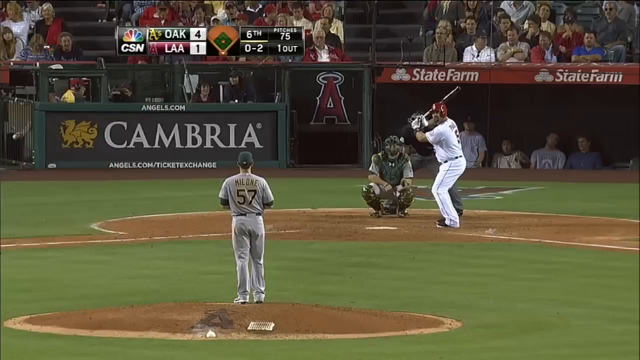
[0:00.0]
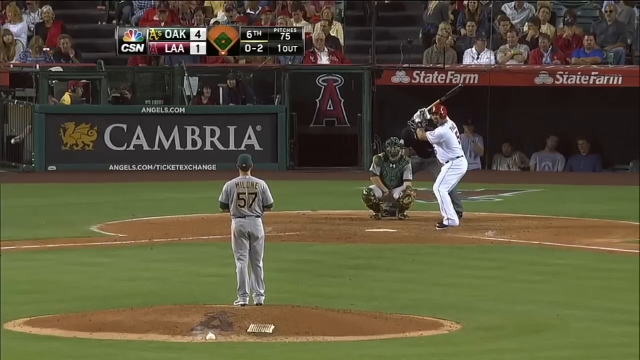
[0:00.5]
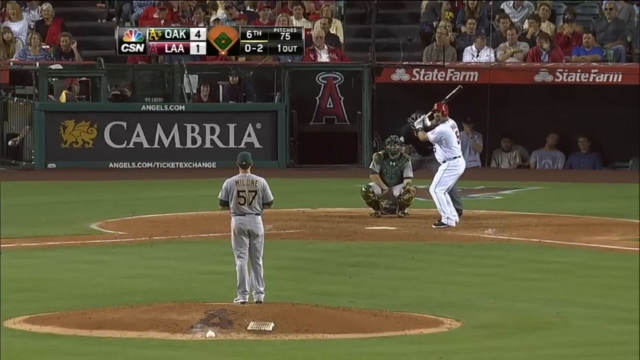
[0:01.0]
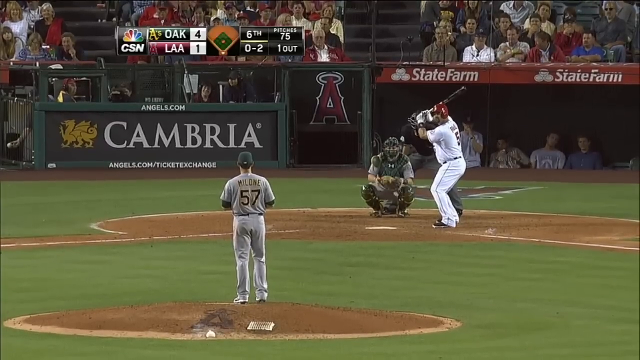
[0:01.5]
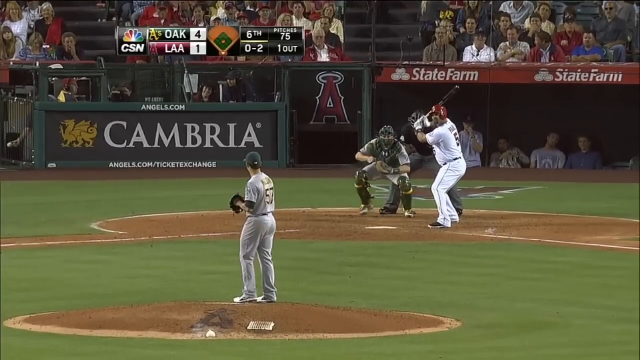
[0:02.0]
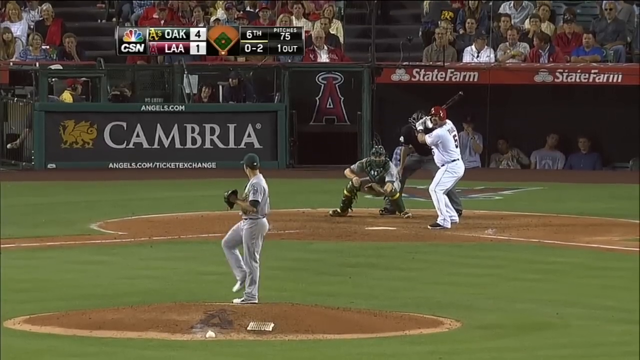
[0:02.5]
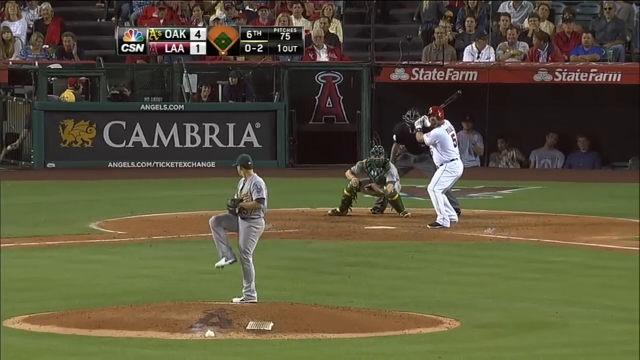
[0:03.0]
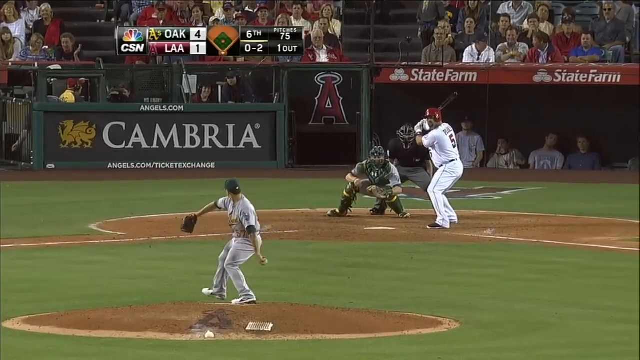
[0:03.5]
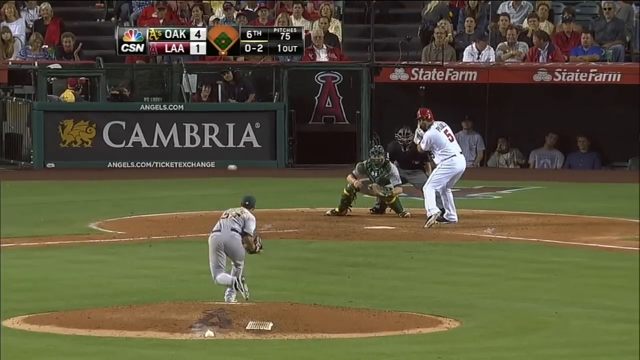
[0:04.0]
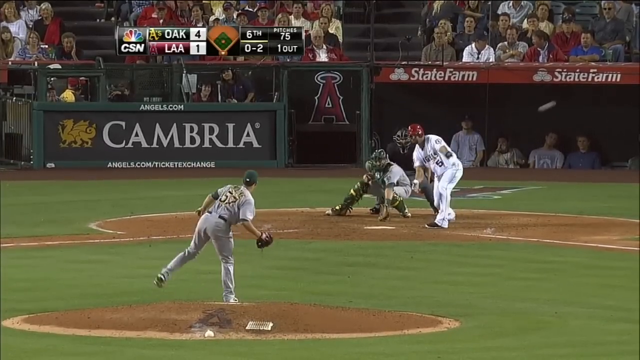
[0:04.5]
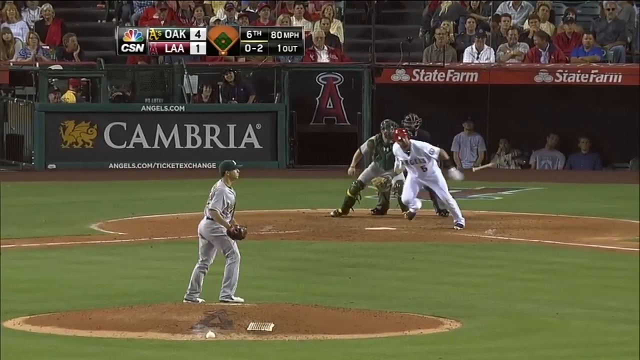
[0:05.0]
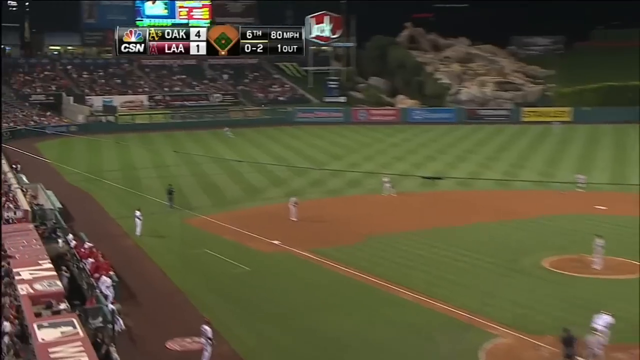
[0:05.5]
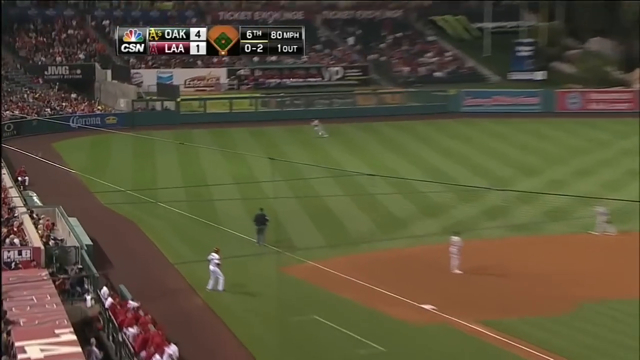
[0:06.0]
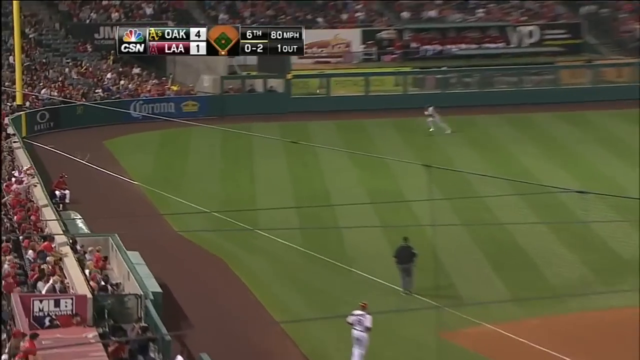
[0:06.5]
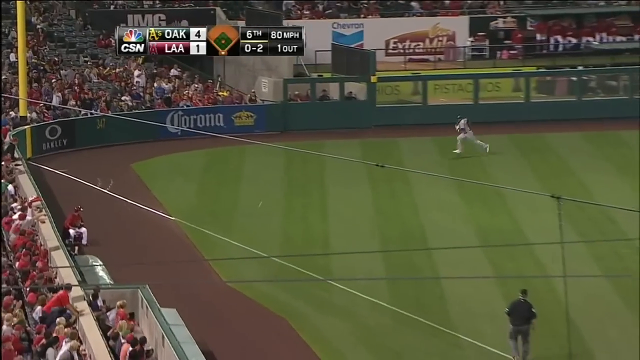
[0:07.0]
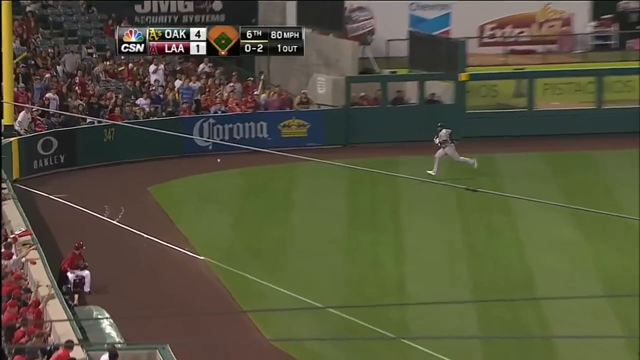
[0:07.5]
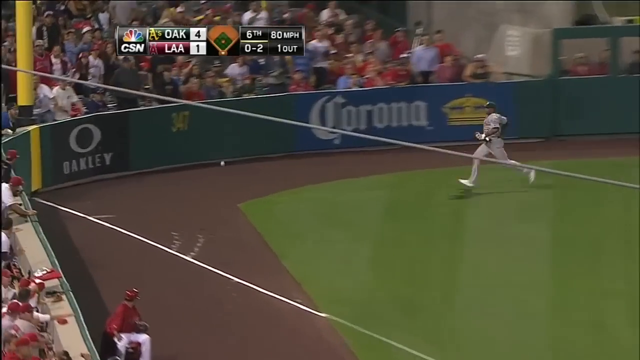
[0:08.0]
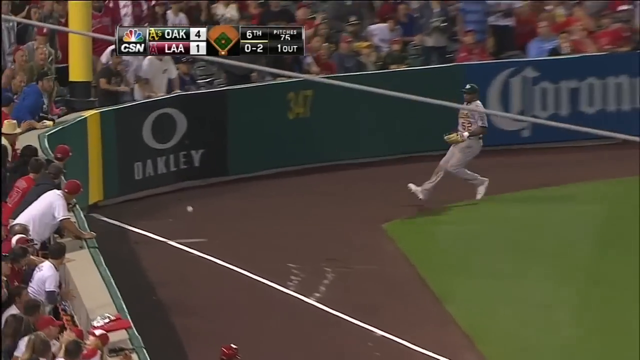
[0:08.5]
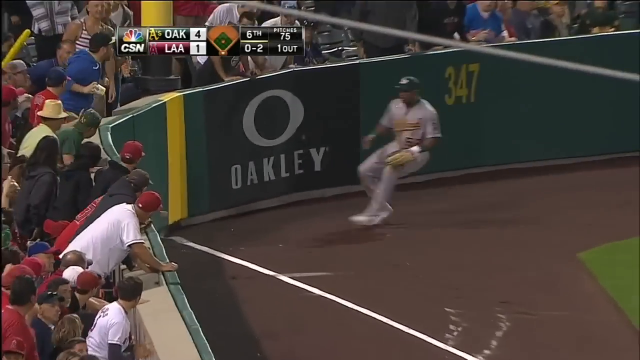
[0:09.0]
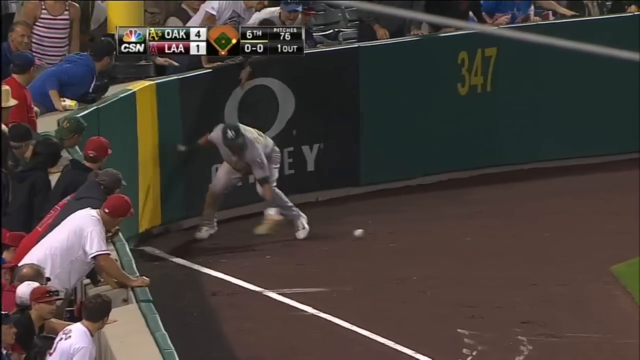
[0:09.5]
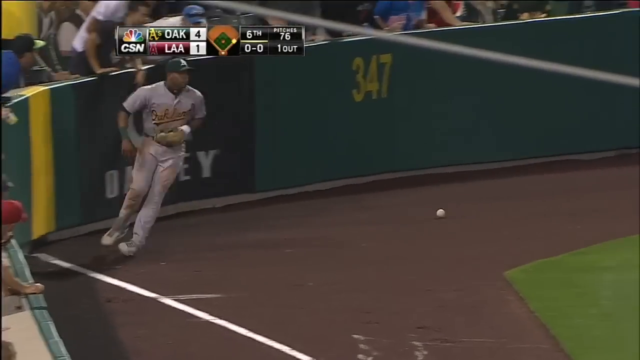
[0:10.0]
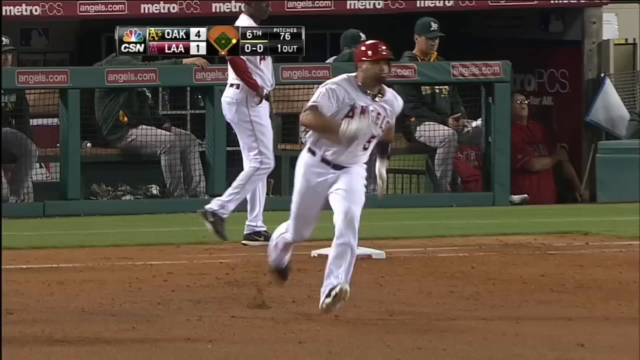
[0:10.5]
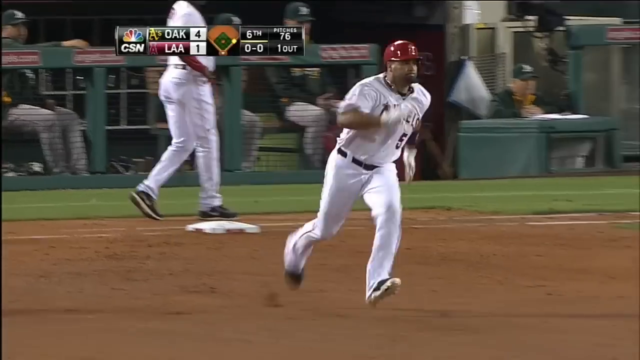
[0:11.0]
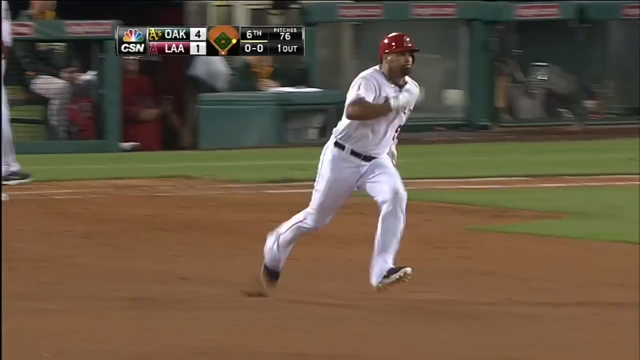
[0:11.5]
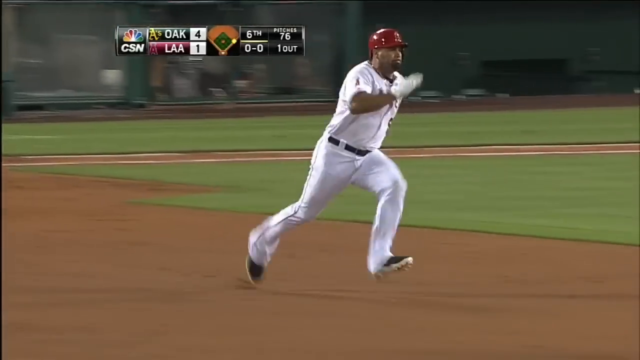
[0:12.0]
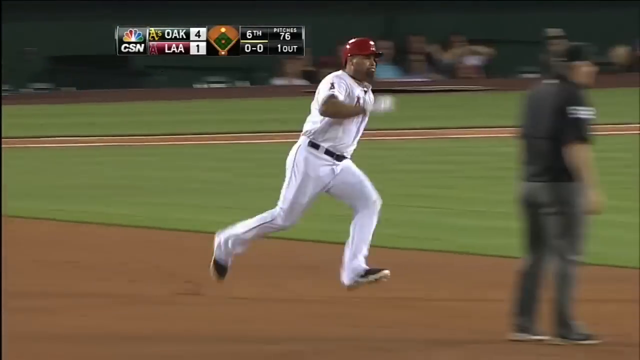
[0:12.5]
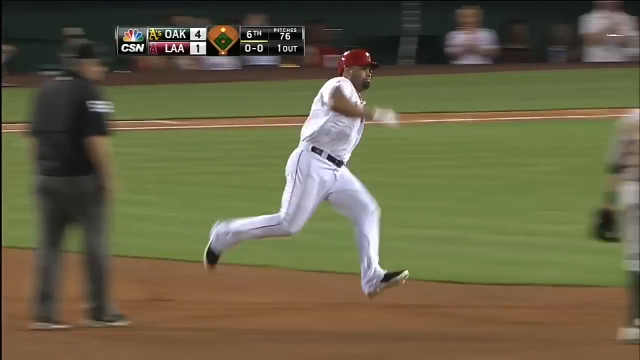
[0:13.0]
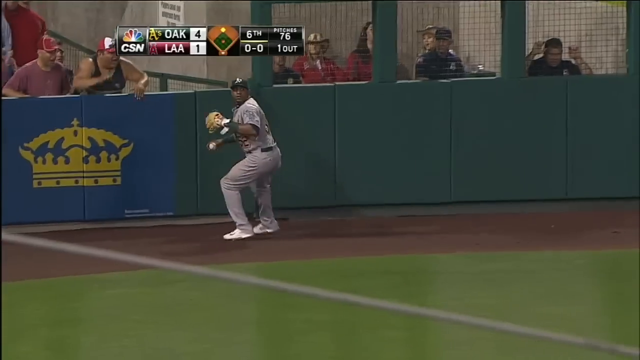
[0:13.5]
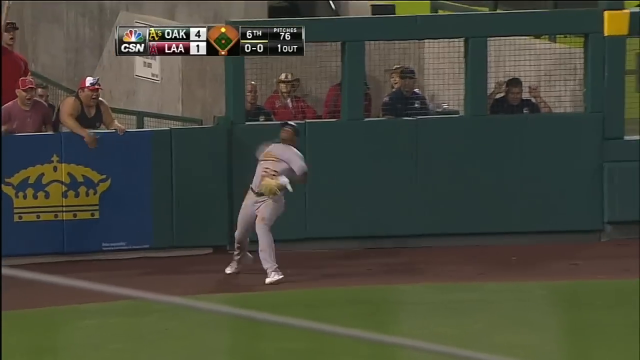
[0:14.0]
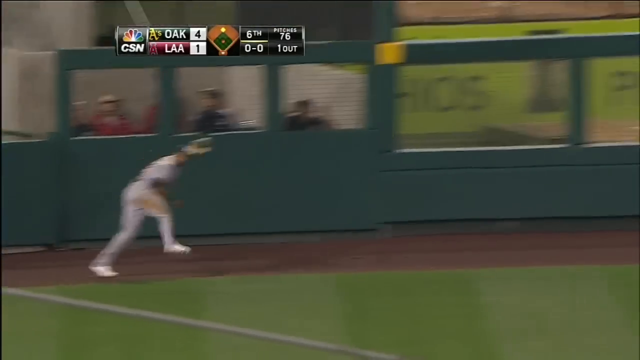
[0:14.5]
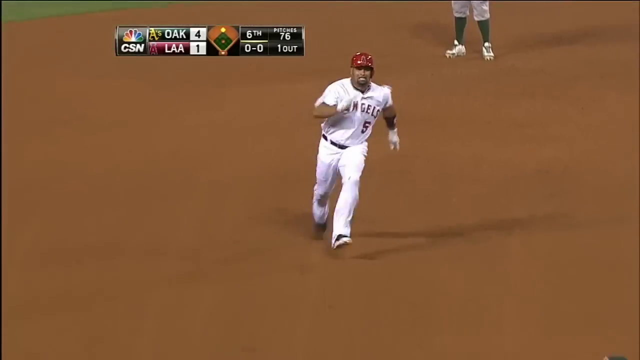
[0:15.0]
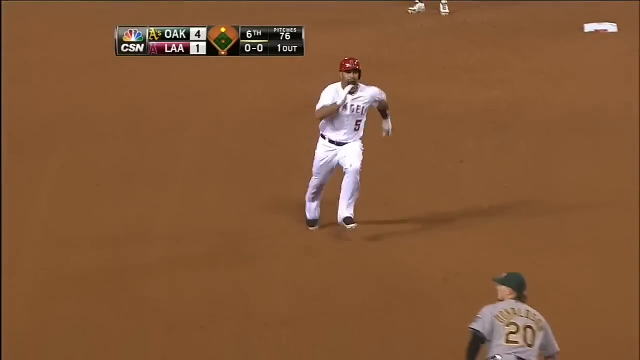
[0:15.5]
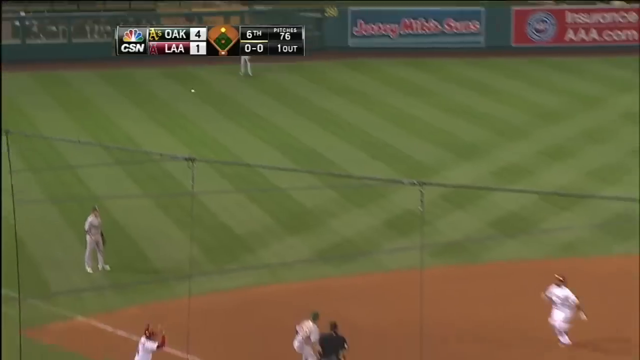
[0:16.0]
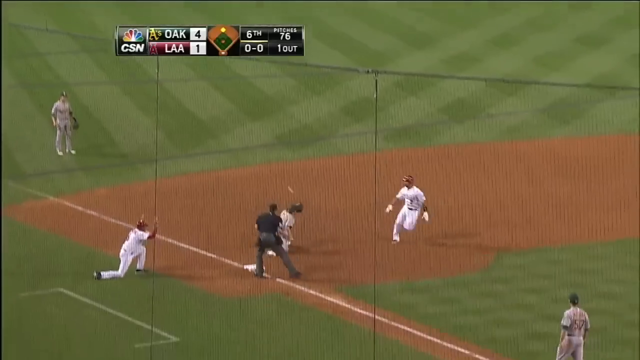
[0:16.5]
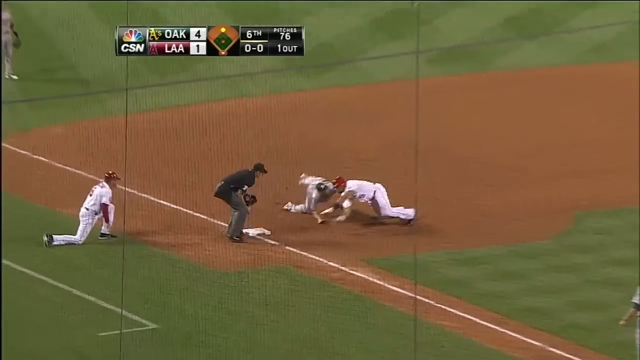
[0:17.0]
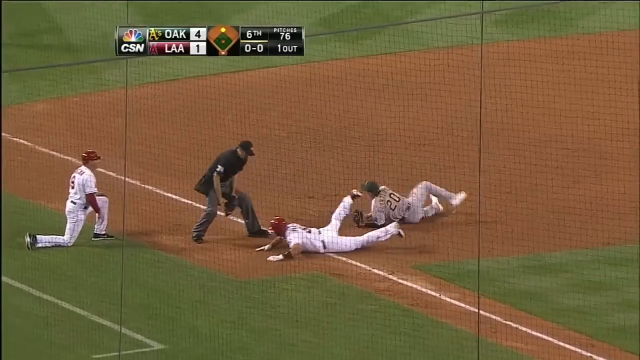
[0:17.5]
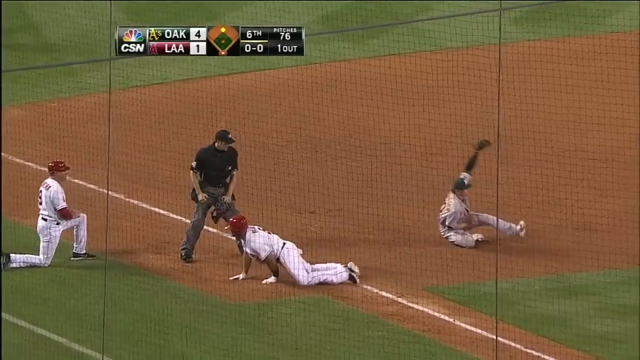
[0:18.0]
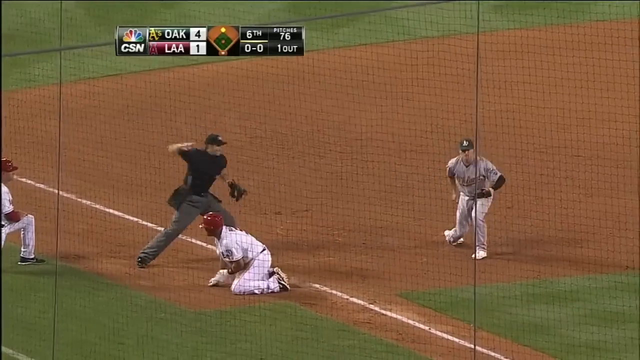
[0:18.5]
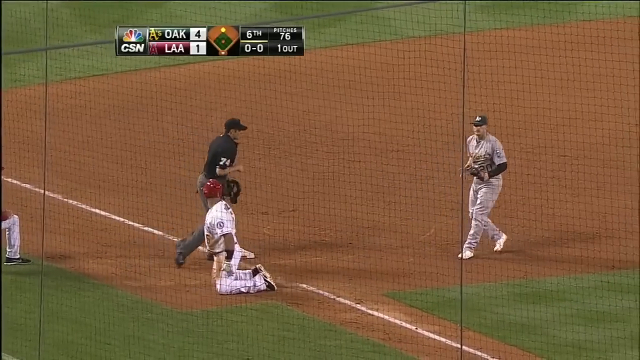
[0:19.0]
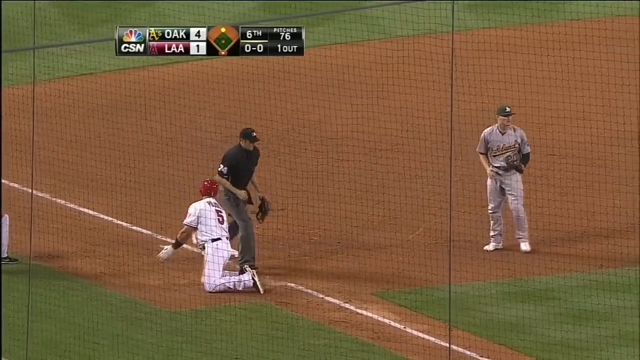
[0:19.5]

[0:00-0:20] A baseball game between Oakland and Los Angeles opens with a view from behind a pitcher on the pitcher's mound as he gets ready to throw toward a batter. The pitcher plays for the Oakland A's; he wears his glove on his right hand and throws with his left. Preparing to pitch, he turns sideways with the right side of his body facing the crowd and his back almost facing the batter. He pulls up his right knee, pivots around and throws the ball hard toward home plate with his left arm. The batter sees the ball coming, pulls back to swing with his right arm while keeping the bat steady with his left, and makes contact, hitting a straight line drive into right field.